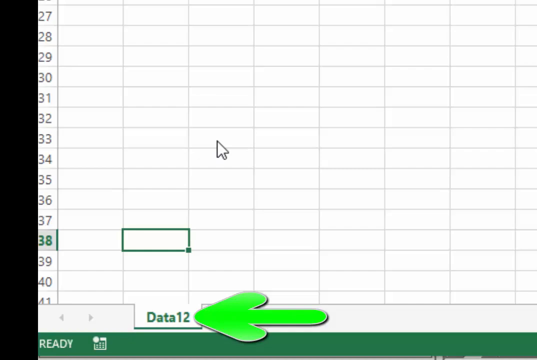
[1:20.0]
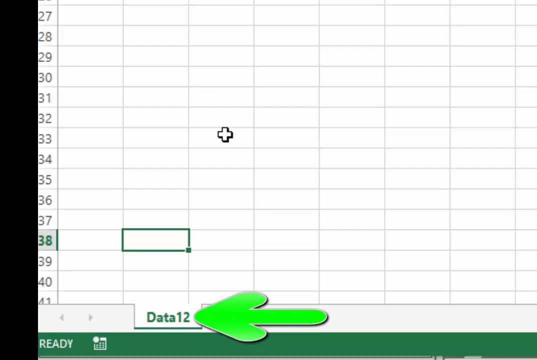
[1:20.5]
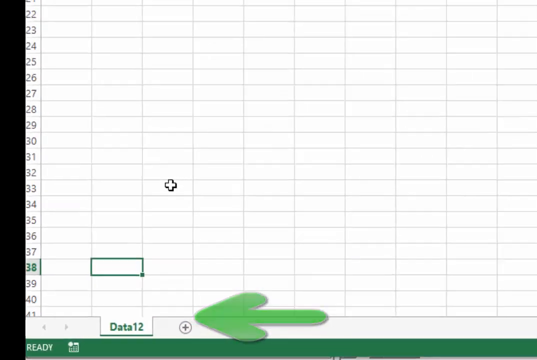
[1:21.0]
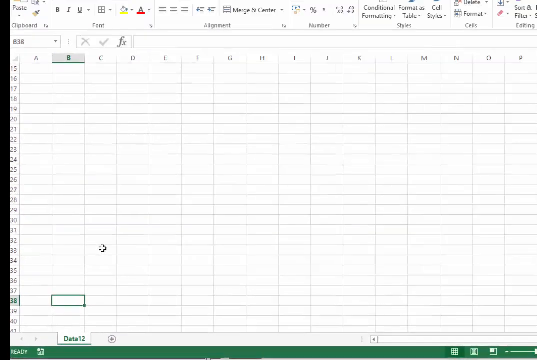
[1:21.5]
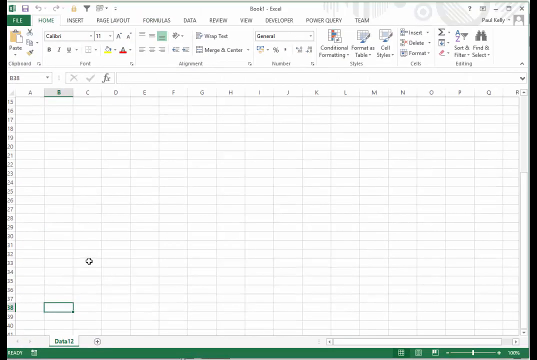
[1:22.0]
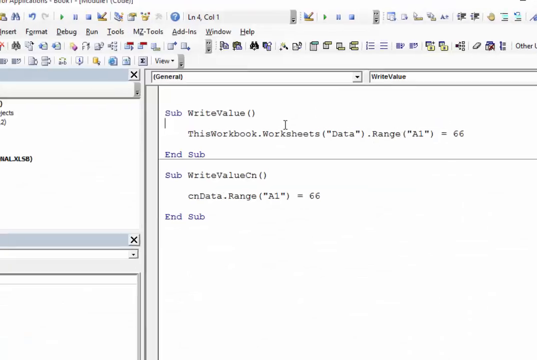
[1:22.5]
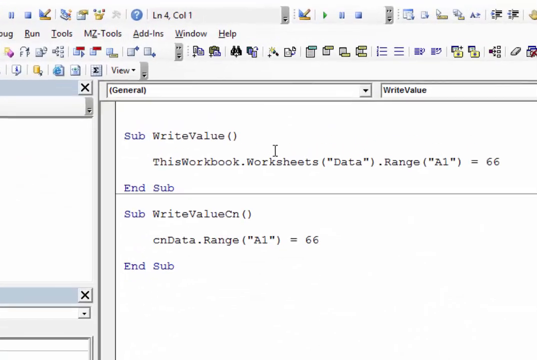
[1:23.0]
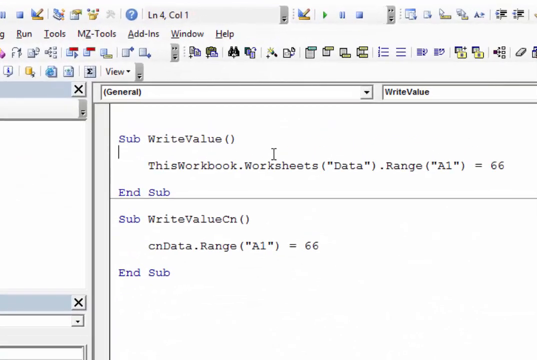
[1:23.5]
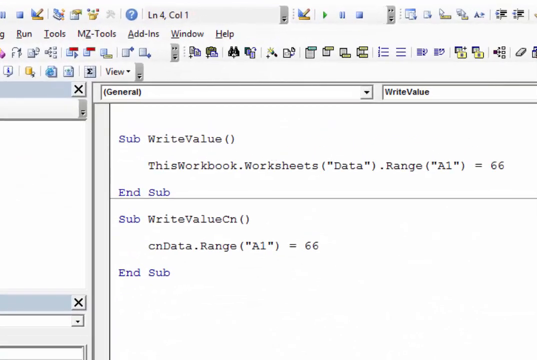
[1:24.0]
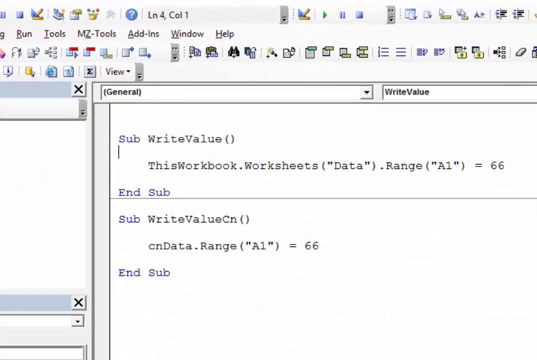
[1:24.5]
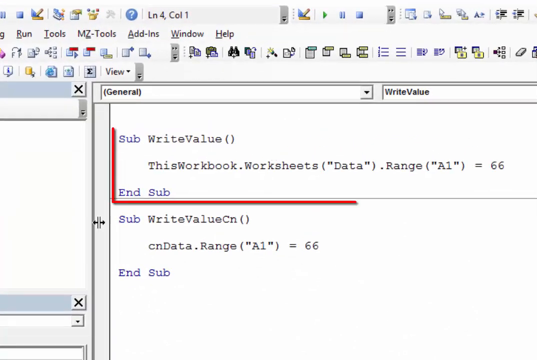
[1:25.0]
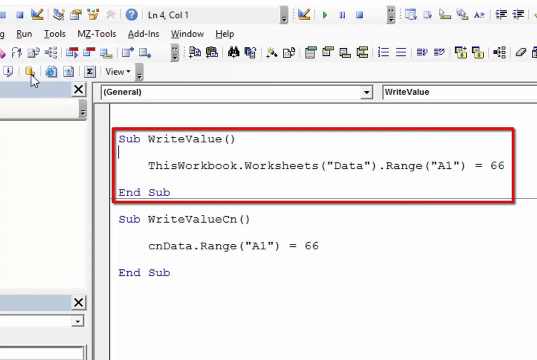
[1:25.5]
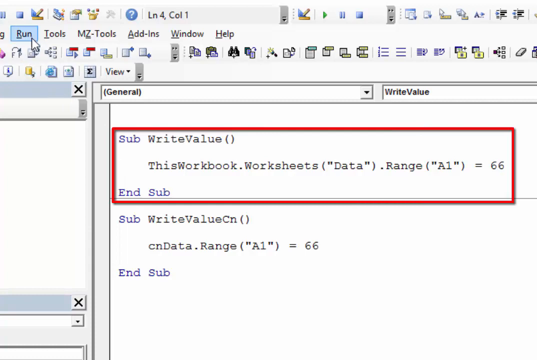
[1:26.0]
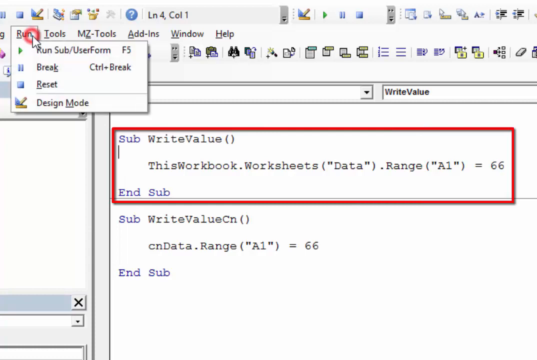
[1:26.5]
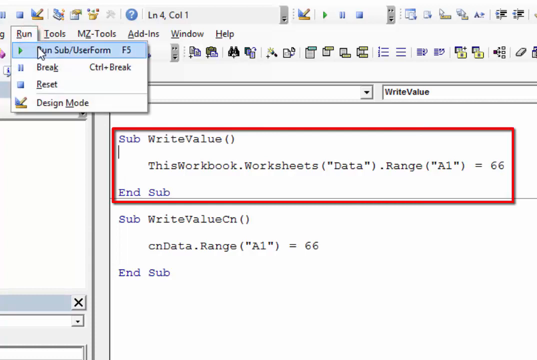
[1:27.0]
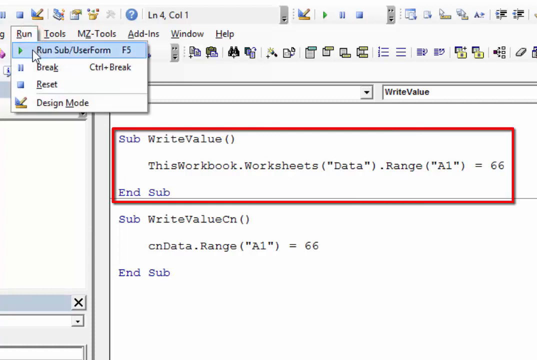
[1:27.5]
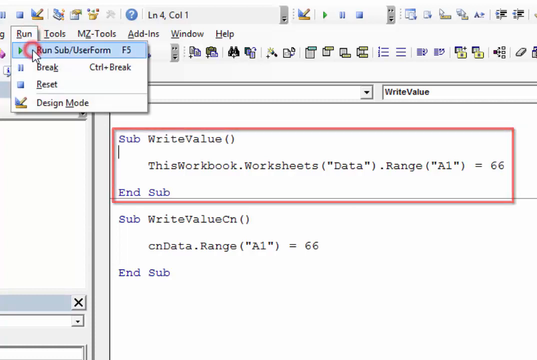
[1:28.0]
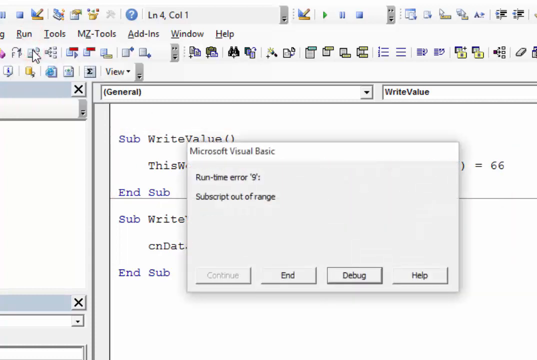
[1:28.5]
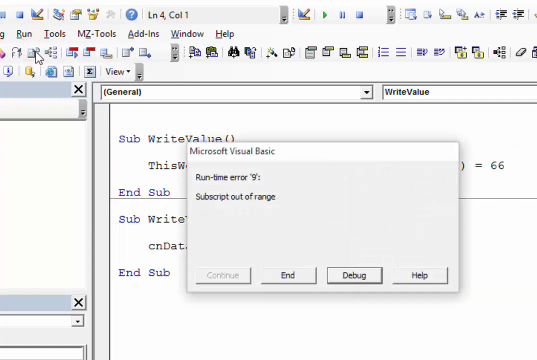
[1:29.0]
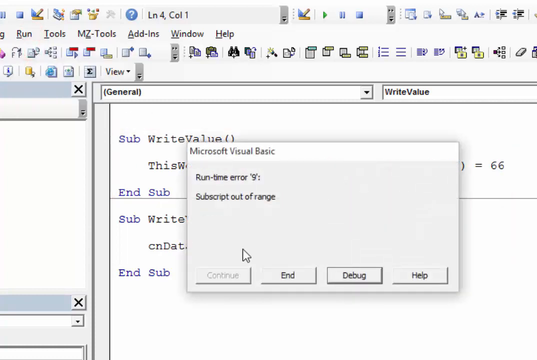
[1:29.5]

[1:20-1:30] The sheet, renamed "data," is shown. At the top left corner of the Excel window there is a run menu. When run is clicked, a dropdown appears in which Microsoft Visual Basic is selected, and choosing an option from the run dropdown brings forward the open, empty Excel workbook.